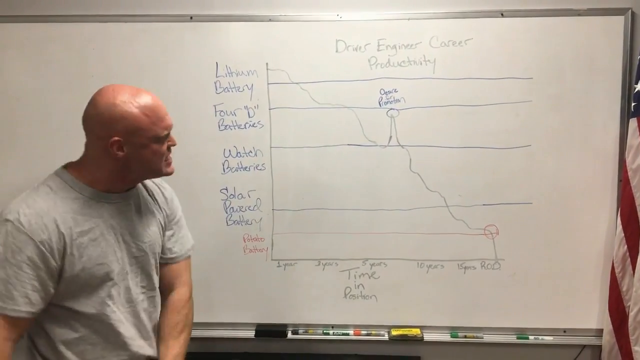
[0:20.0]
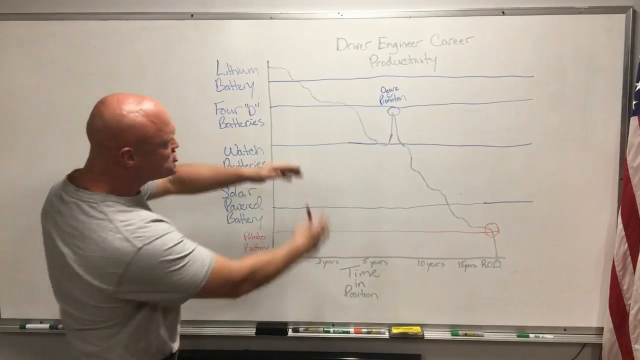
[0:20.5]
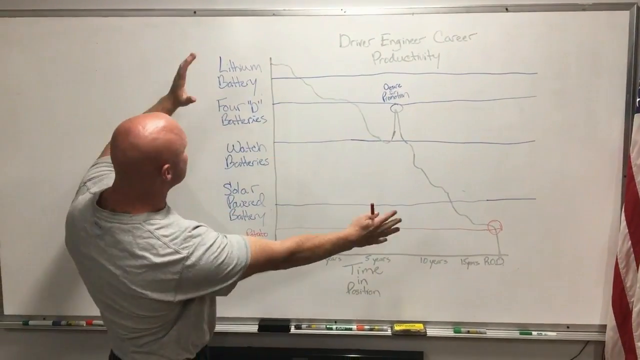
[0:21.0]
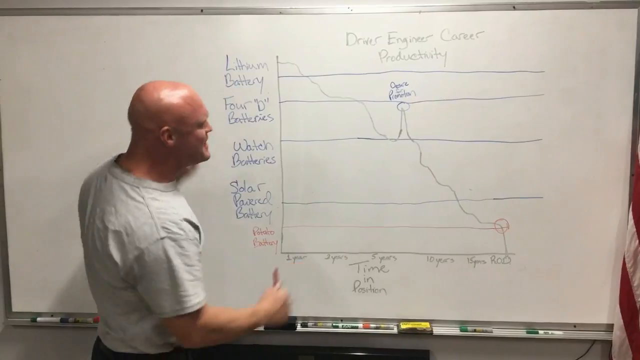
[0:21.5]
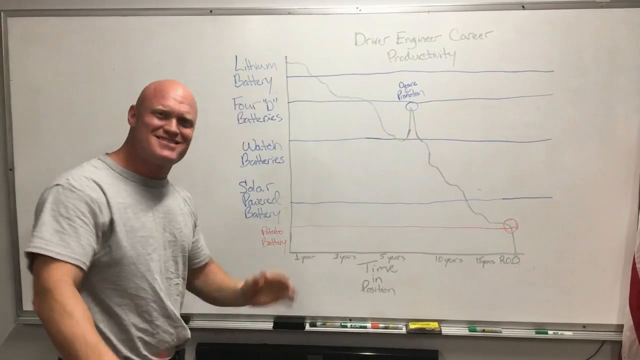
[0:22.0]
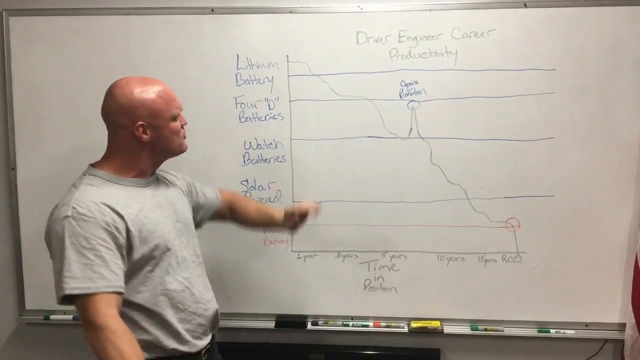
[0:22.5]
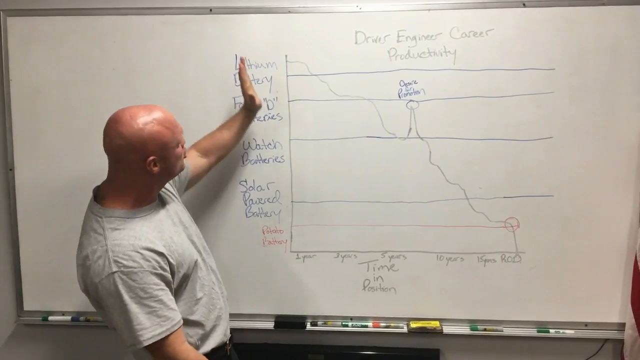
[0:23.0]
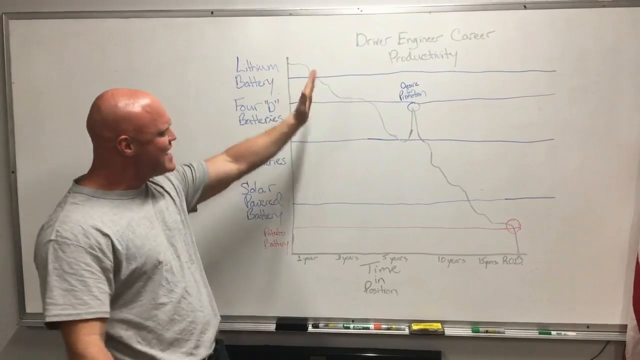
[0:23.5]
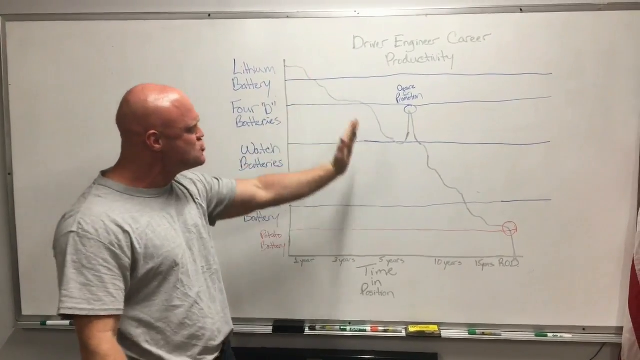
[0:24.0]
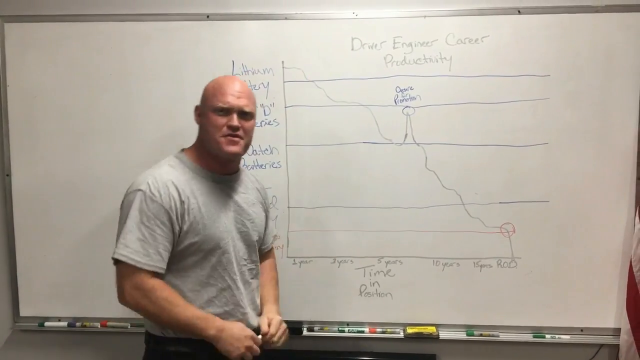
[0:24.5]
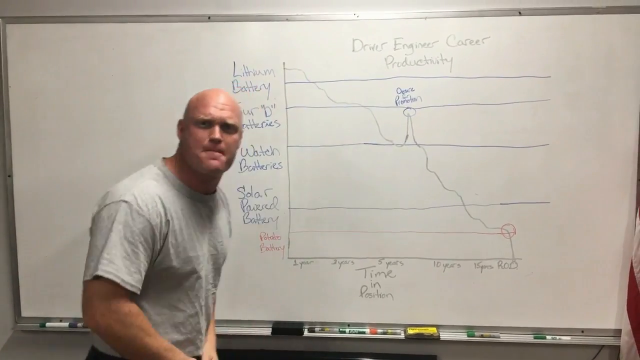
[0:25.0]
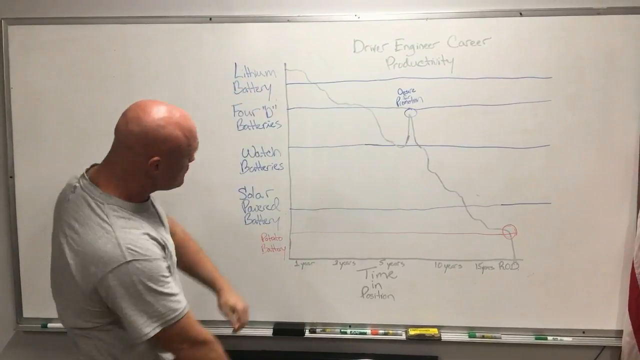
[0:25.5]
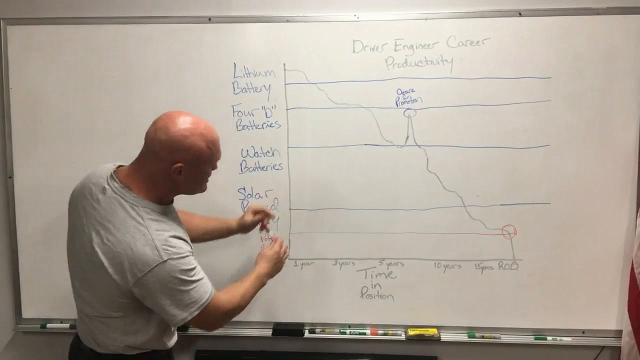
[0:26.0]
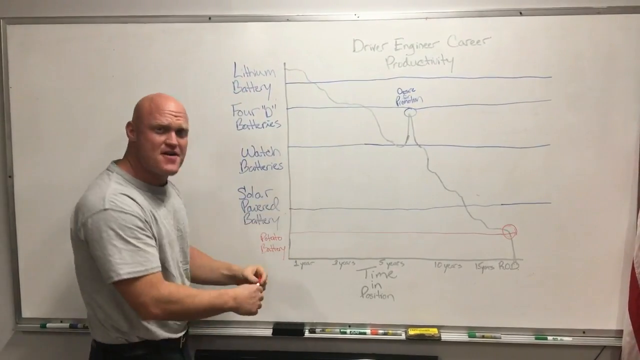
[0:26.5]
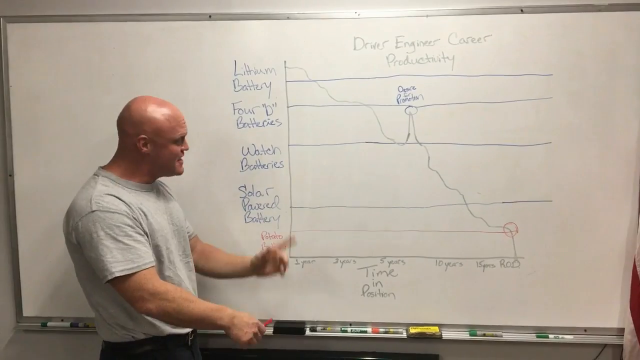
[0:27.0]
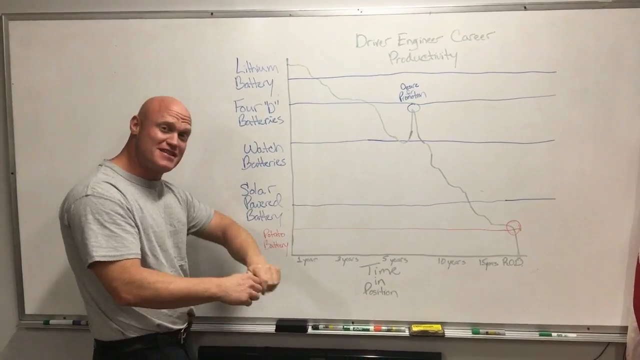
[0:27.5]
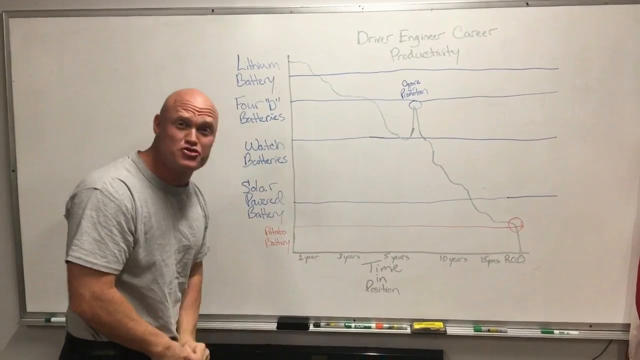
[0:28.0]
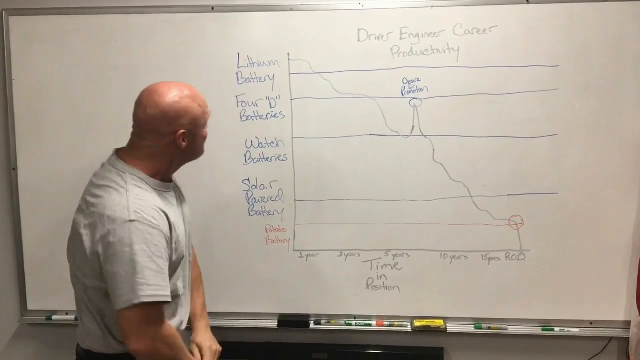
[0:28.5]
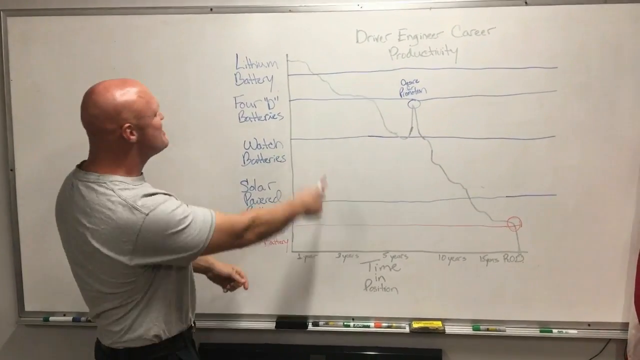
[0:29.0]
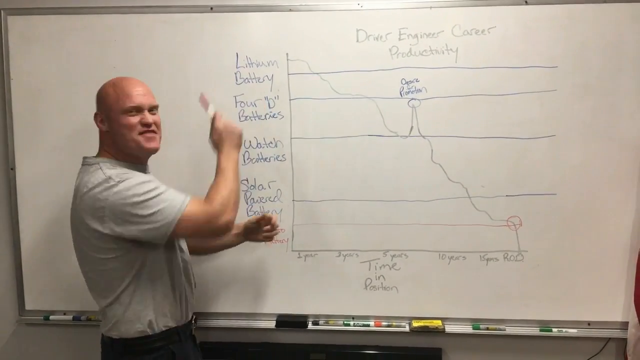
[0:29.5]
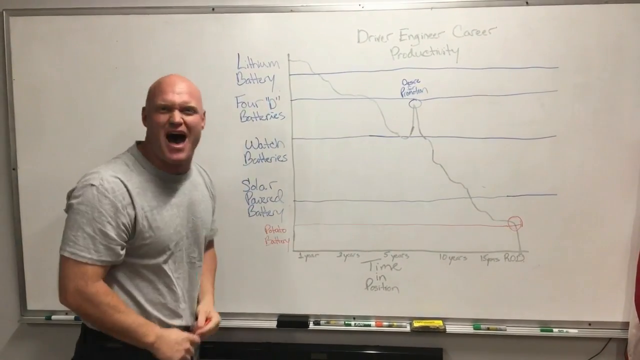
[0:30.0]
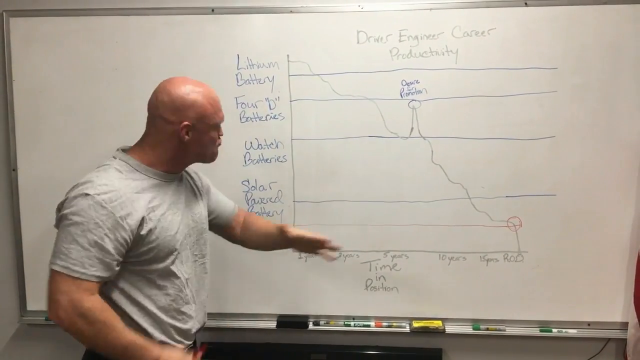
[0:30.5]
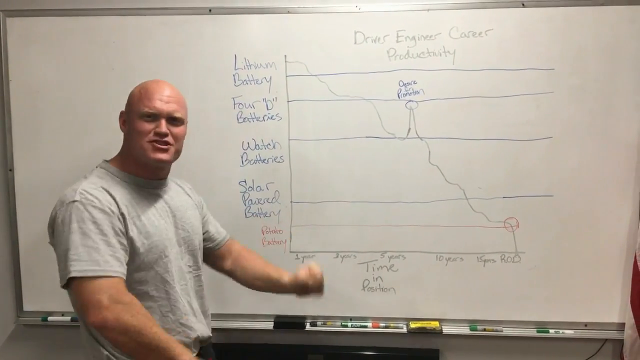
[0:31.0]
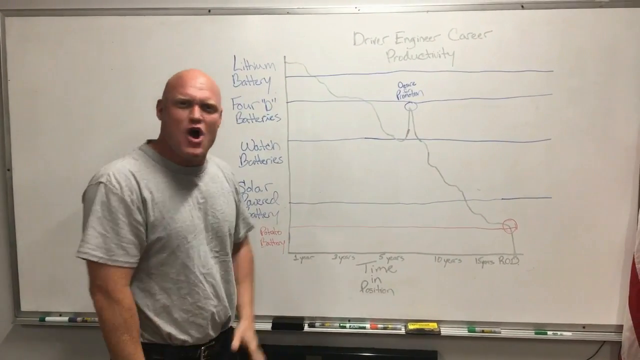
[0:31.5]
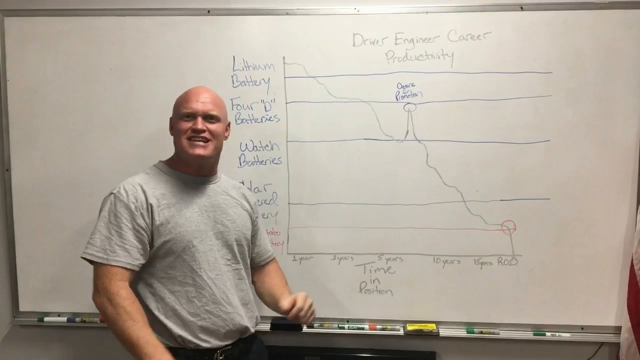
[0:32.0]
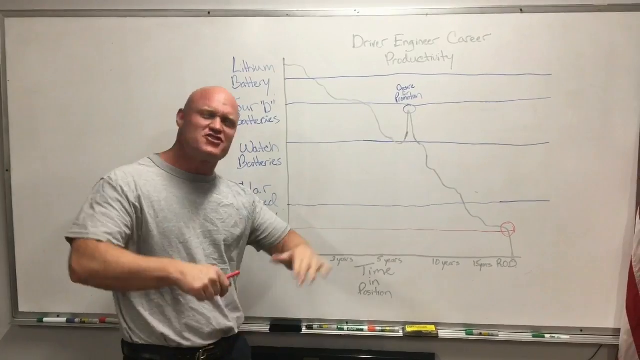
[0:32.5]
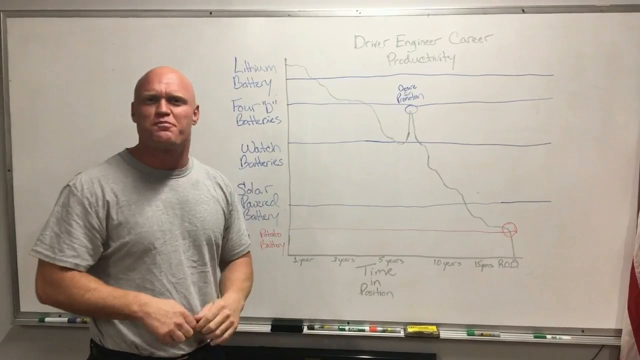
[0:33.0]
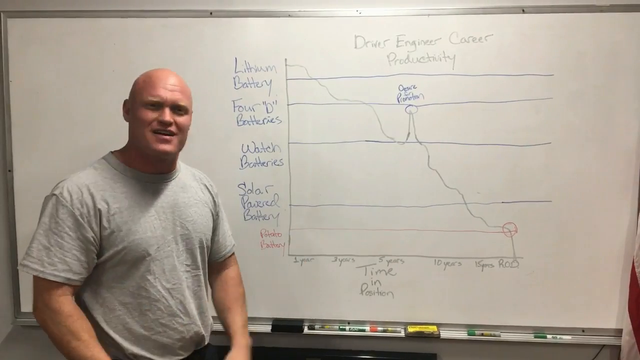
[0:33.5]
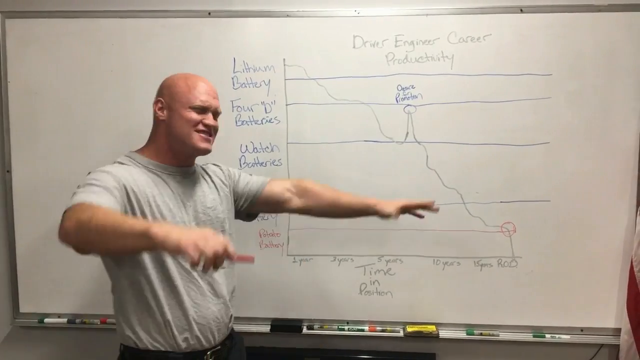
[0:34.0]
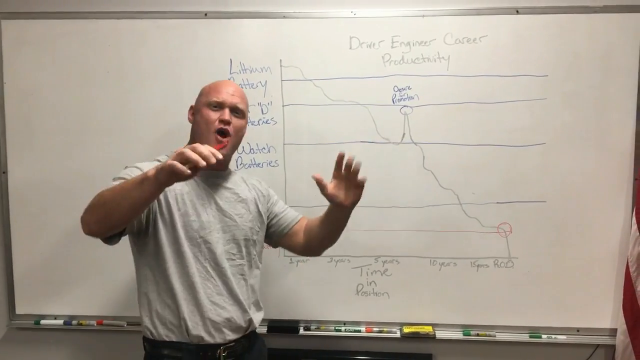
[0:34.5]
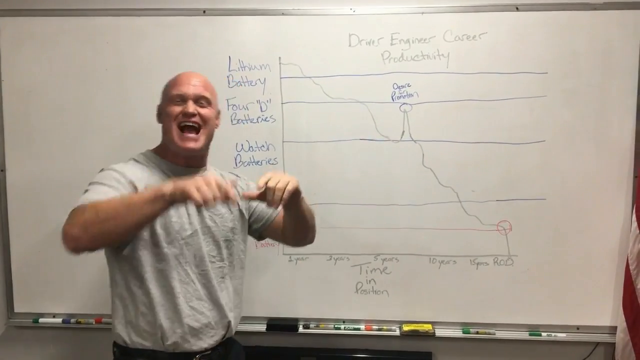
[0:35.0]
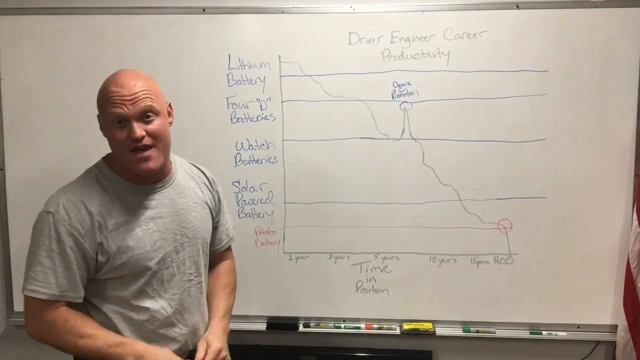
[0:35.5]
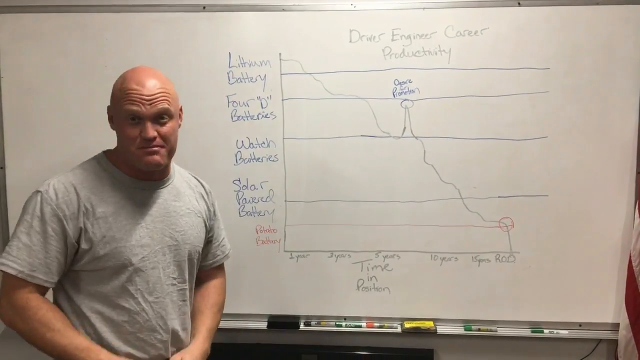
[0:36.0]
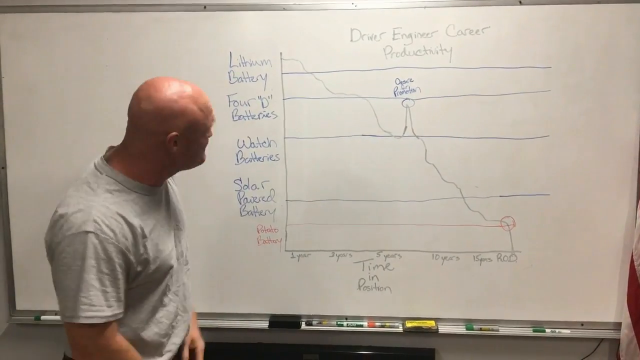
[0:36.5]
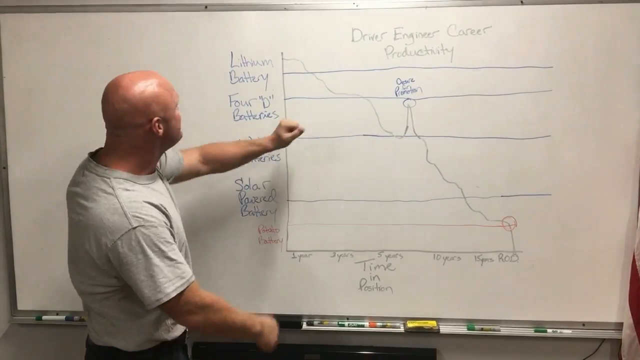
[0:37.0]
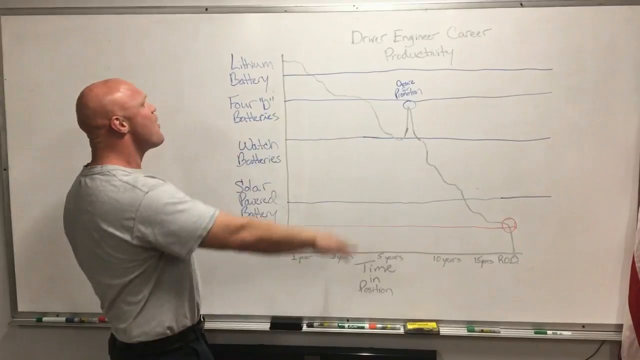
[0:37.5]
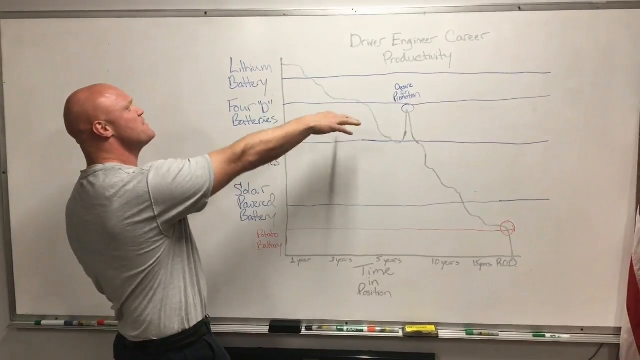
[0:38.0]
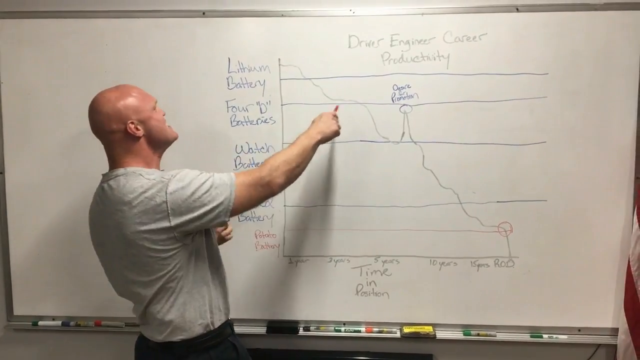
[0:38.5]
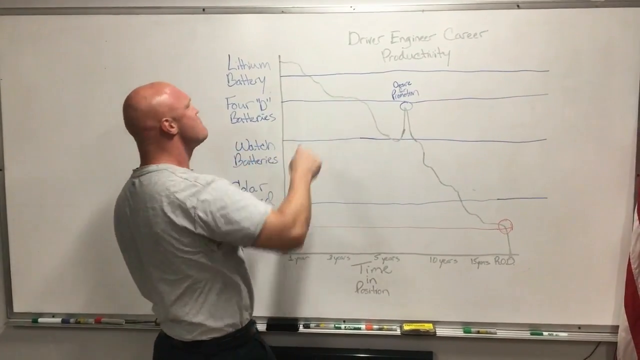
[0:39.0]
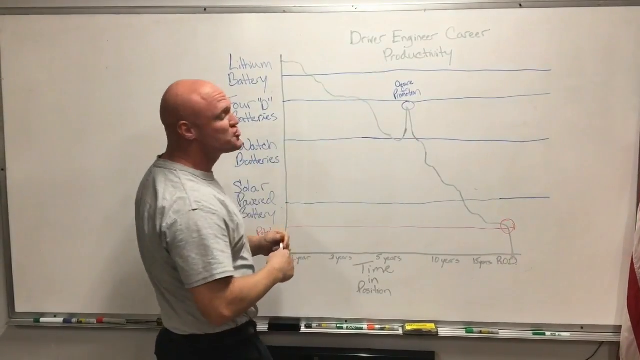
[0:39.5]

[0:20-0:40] The man gestures toward the middle of the graph, holding a marker in his right hand and wearing a gray shirt, still very vocal. He makes a grand gesture outward from the graph, which appears to be about types of batteries, including lithium, watch and solar-powered batteries. His facial expressions seem energetic and cheerful. He raises his hand toward the top of the graph and makes a curving motion, perhaps to show a dip in the line graph. He raises his marker and points toward lithium batteries while turning toward the camera and saying something; his mouth opens wide and he appears to be speaking loudly. He gestures outward with his hands and seems very passionate about the topic. He turns back toward the graph and points to something on the line between lithium batteries and 4D batteries. He continues to speak, turned to the side and gazing slightly down.